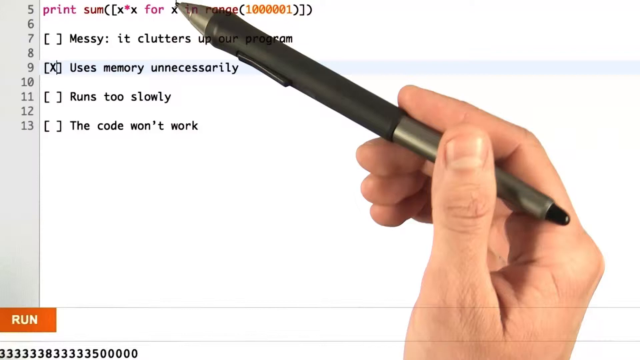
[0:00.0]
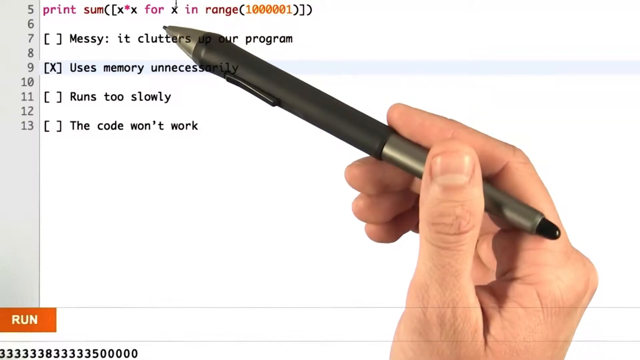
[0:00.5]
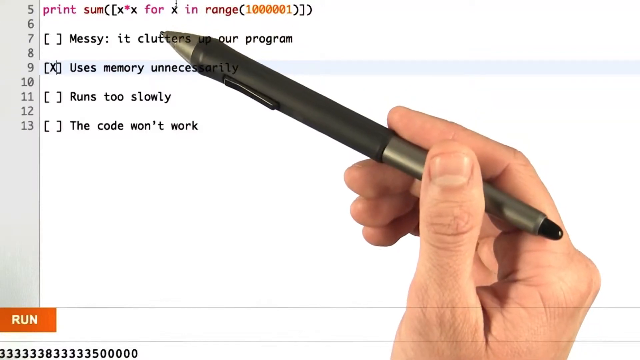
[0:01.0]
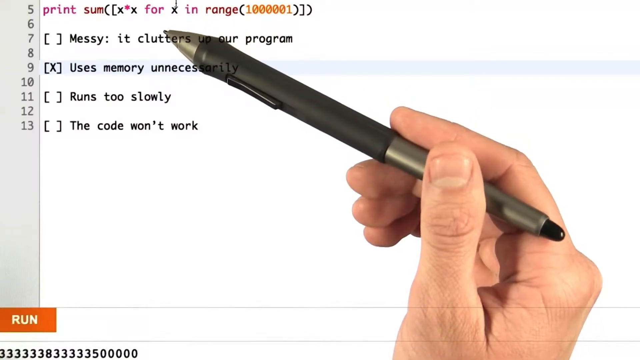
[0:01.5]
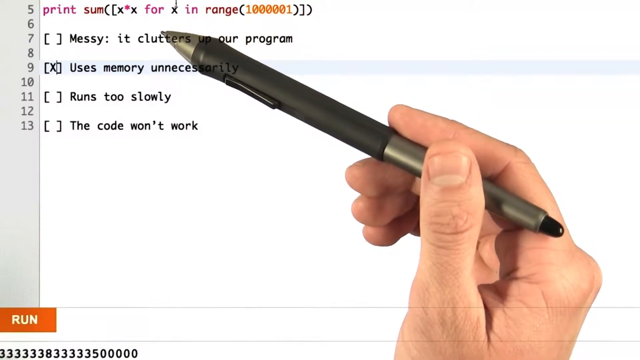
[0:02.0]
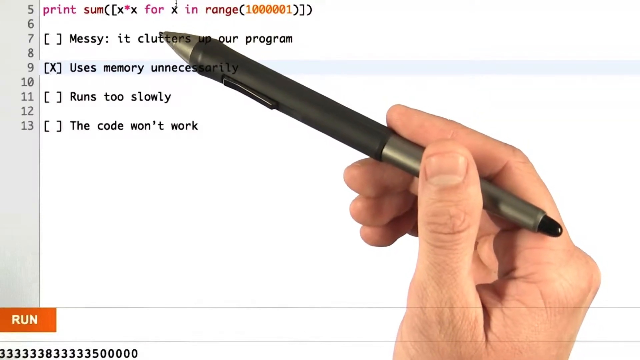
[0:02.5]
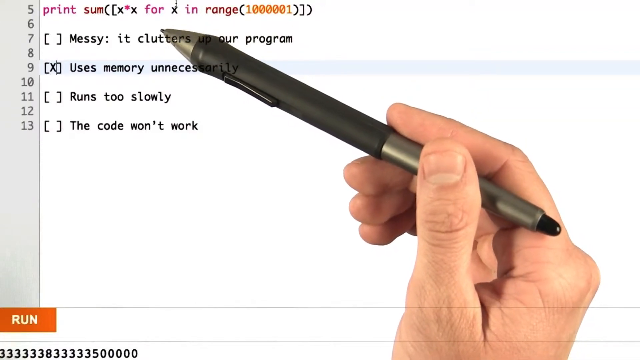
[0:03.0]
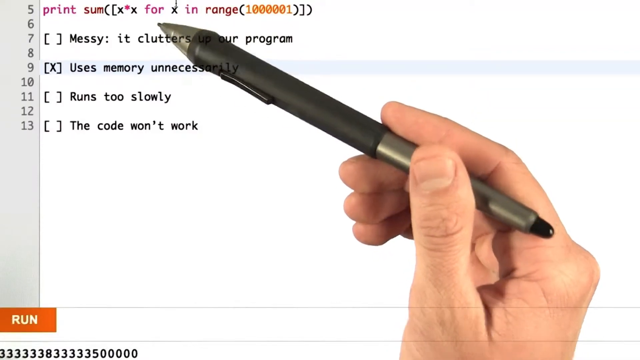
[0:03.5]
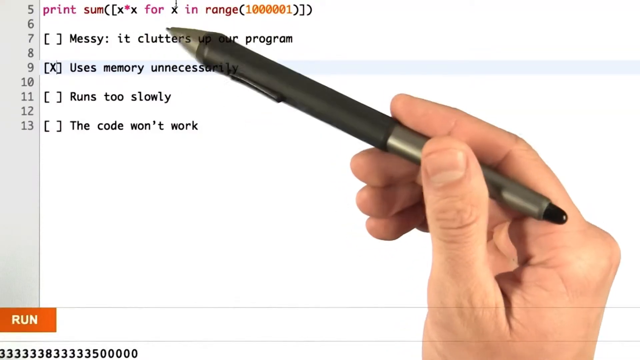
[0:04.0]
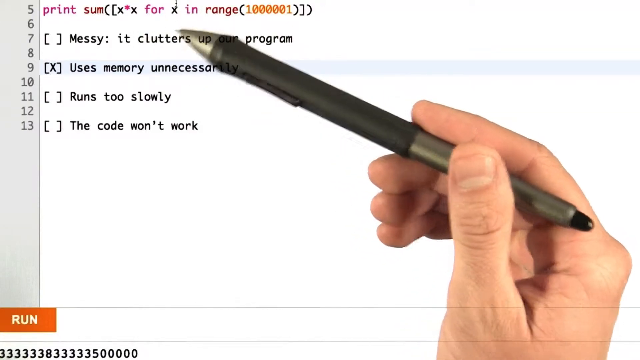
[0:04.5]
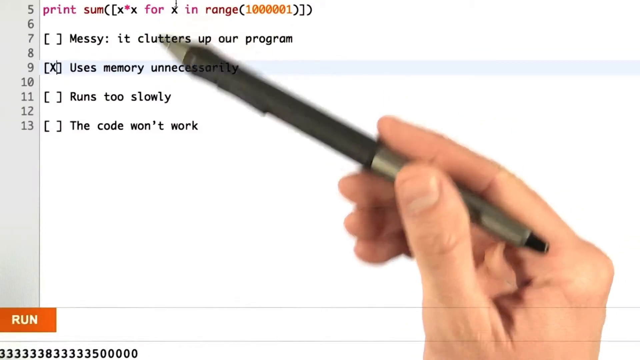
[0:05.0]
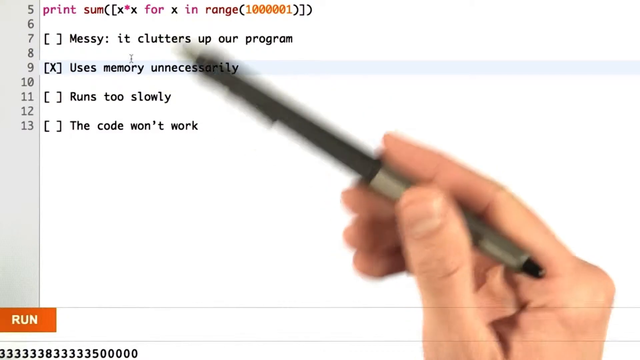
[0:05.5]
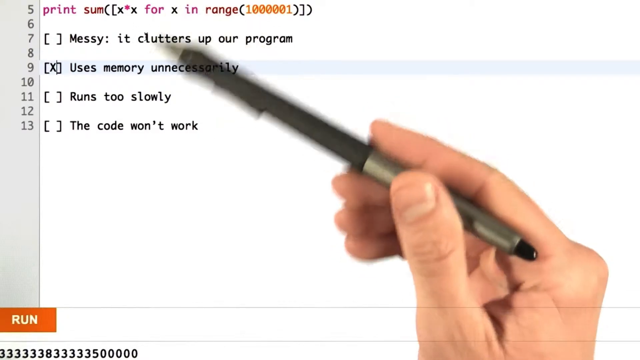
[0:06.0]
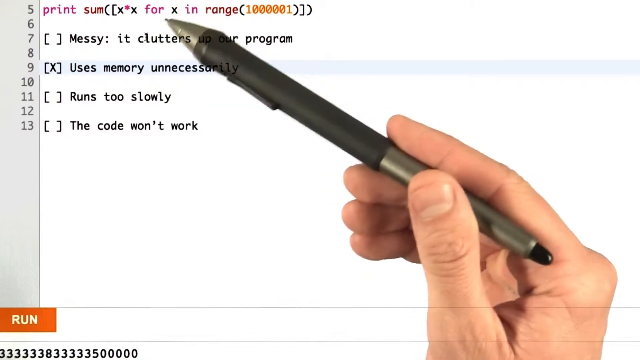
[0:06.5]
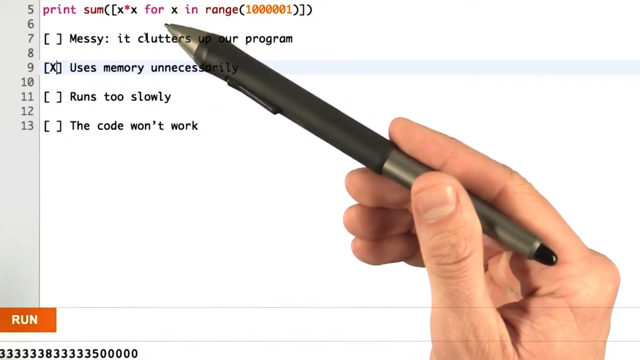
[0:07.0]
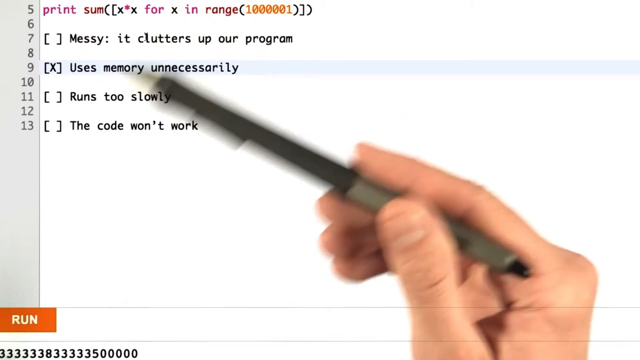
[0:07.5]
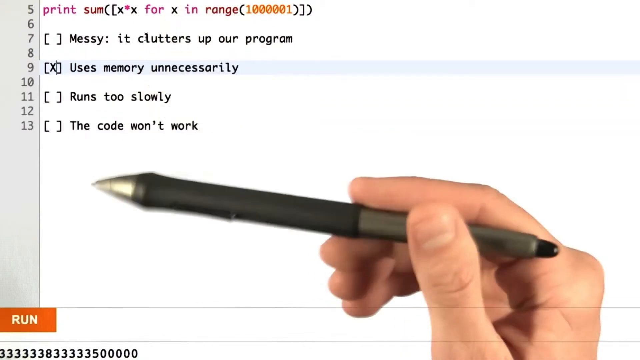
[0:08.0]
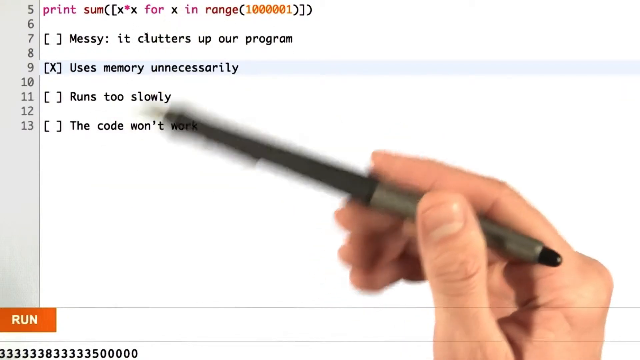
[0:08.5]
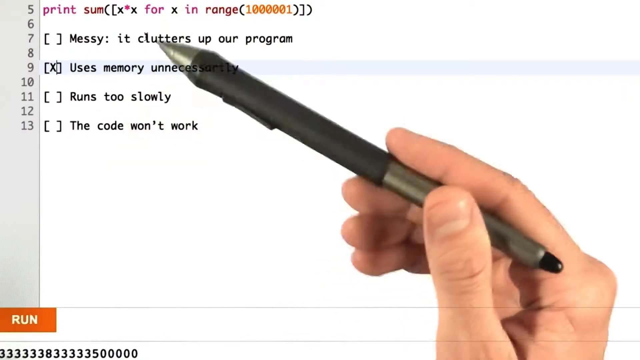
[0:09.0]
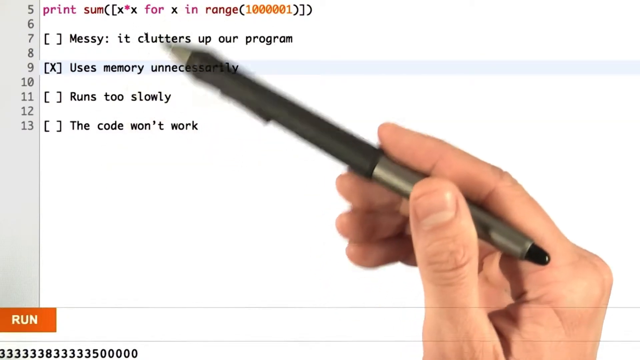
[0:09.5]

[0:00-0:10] The video starts with what looks like a man's hand holding an ink pen, hovering over a projector image. He points on the paper where the projector points, and the projected content can be seen going across the pen. What is shown is a print summary followed by a list; it looks like code for checking for errors in a program, apparently a print summary for when clutter or mess is found or the system is running too slowly.